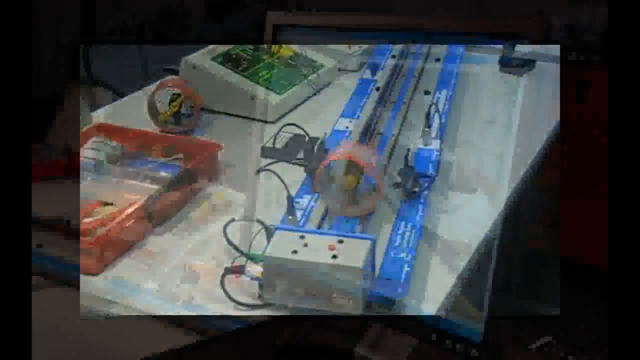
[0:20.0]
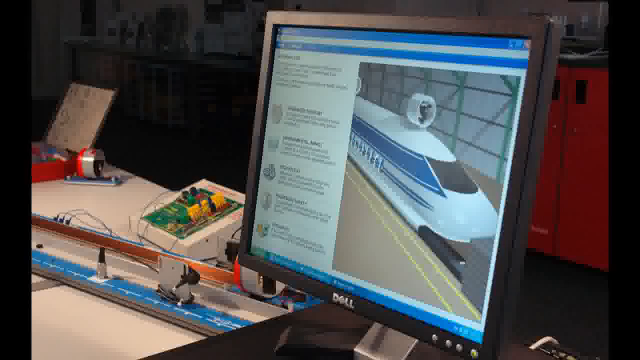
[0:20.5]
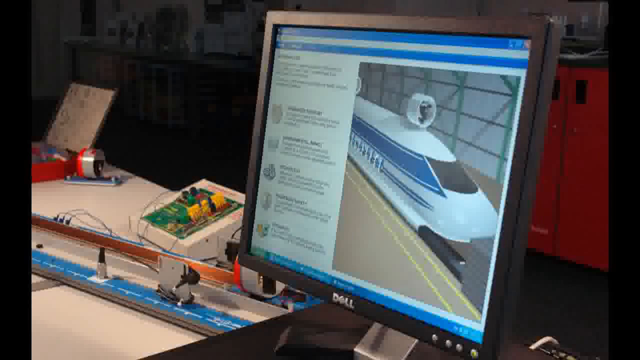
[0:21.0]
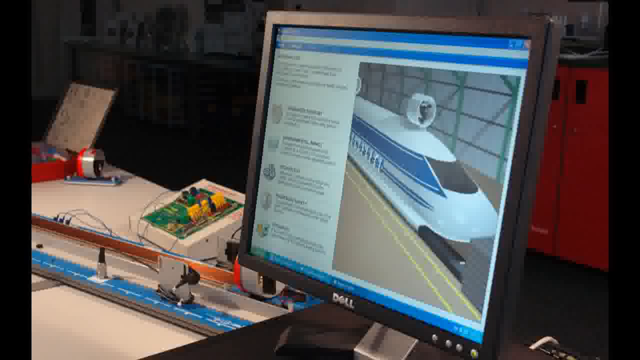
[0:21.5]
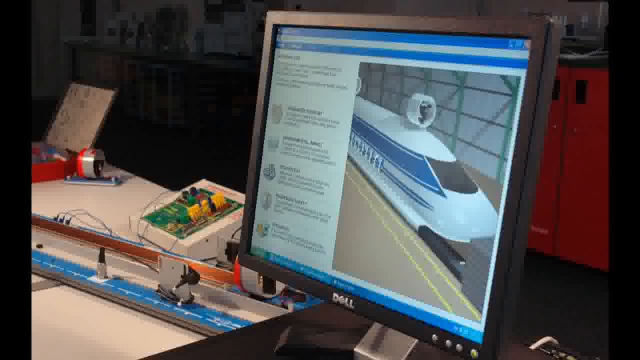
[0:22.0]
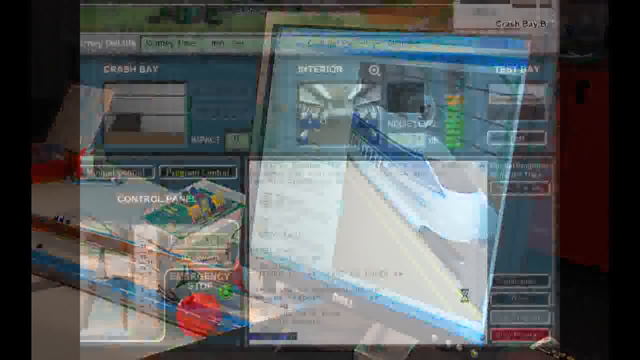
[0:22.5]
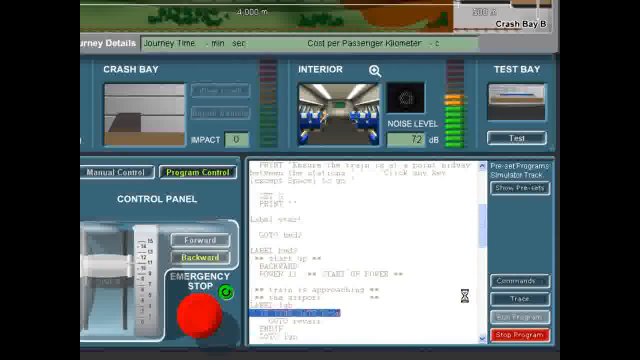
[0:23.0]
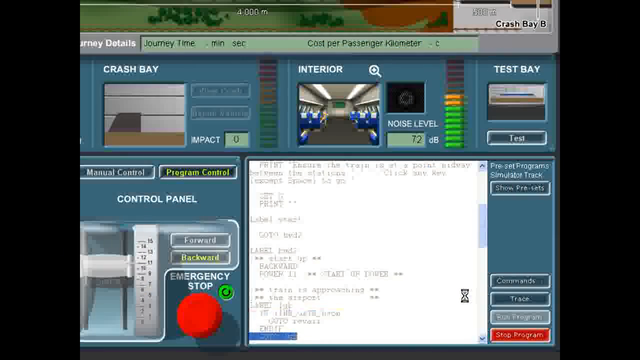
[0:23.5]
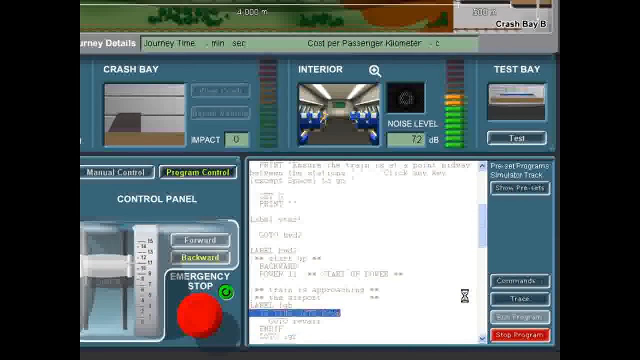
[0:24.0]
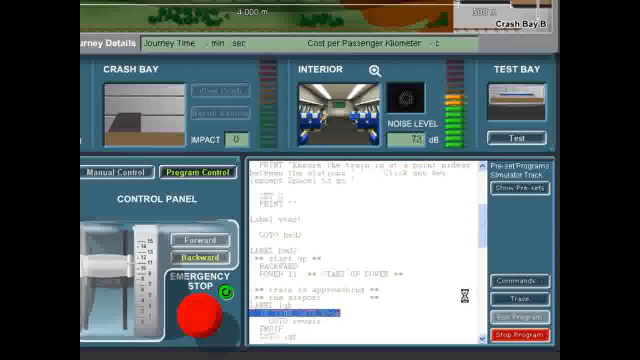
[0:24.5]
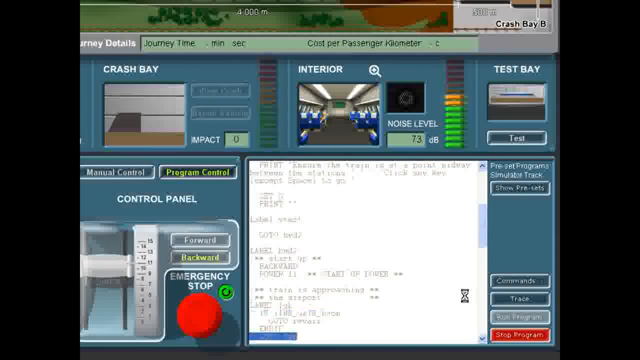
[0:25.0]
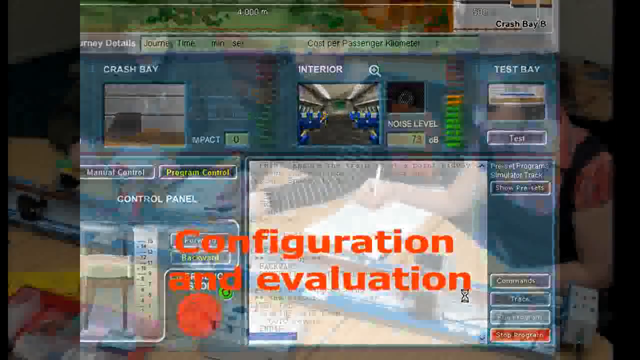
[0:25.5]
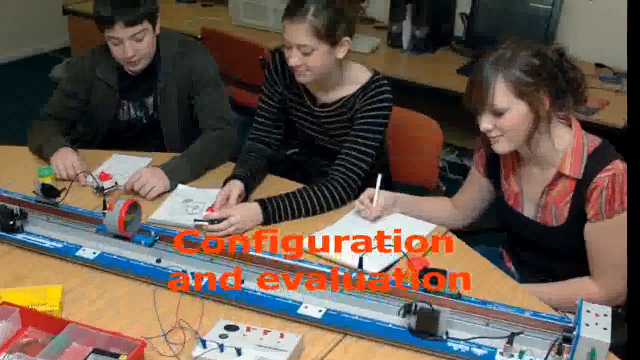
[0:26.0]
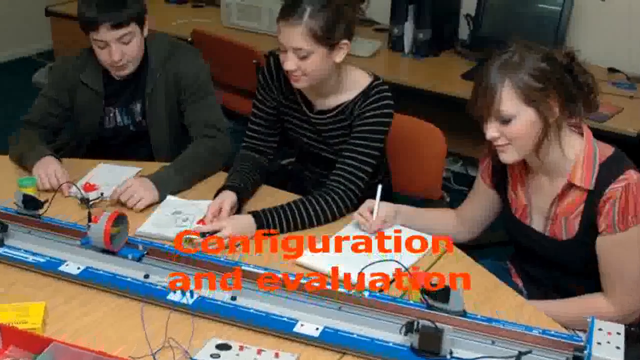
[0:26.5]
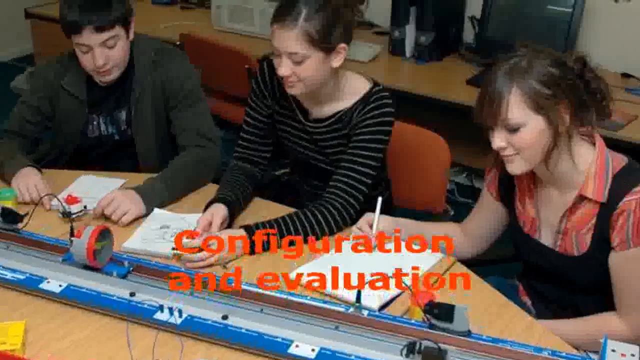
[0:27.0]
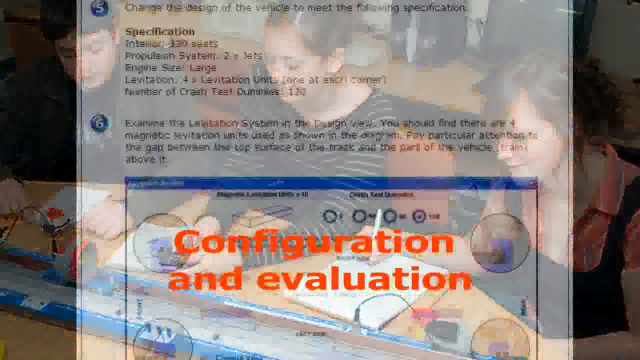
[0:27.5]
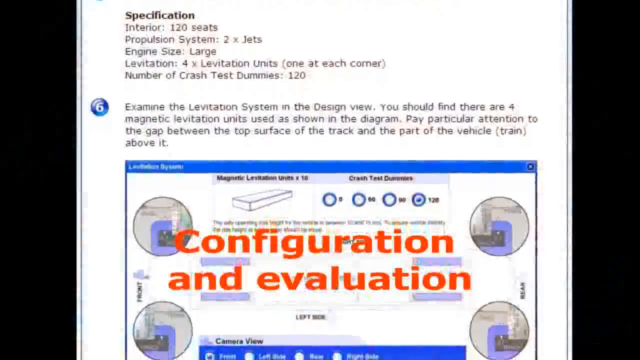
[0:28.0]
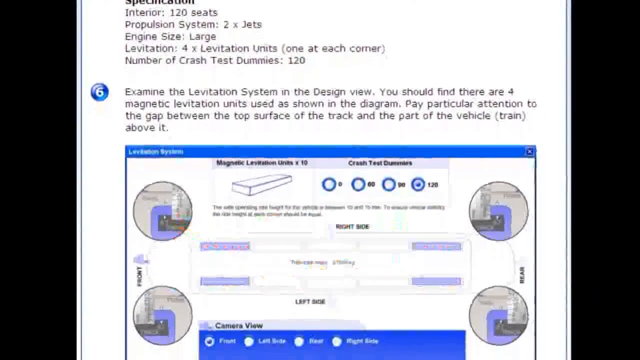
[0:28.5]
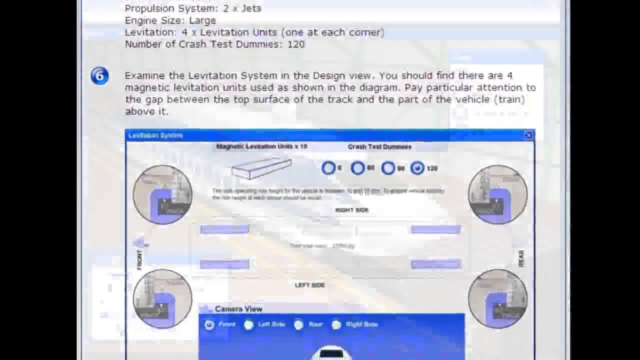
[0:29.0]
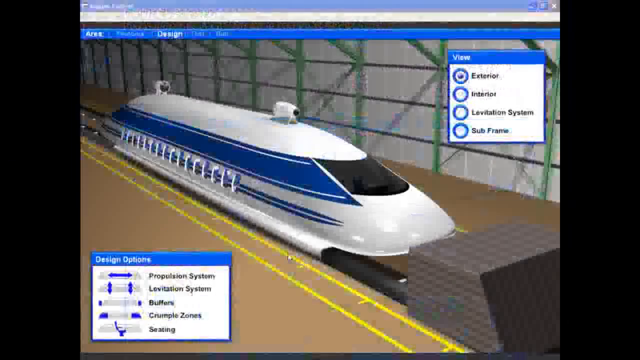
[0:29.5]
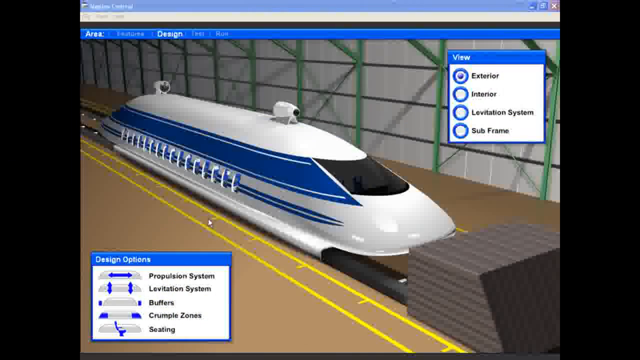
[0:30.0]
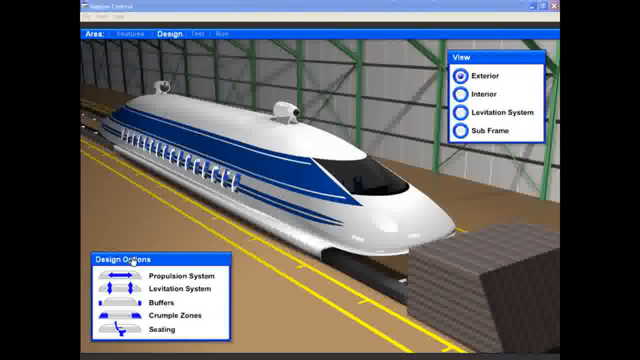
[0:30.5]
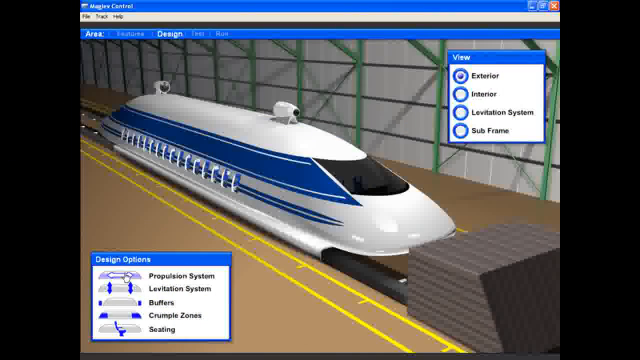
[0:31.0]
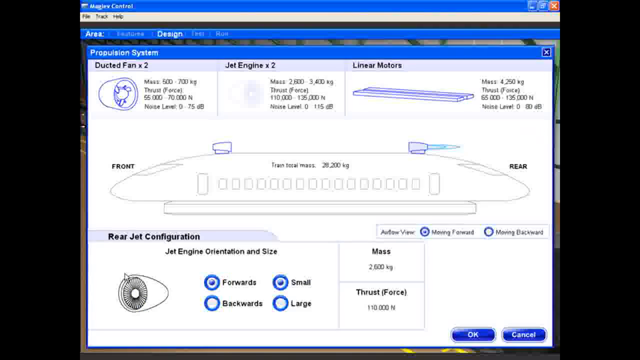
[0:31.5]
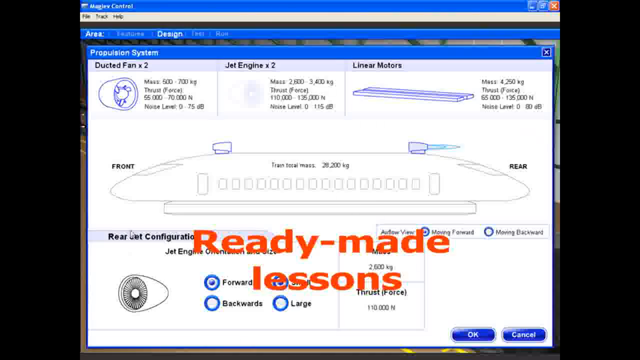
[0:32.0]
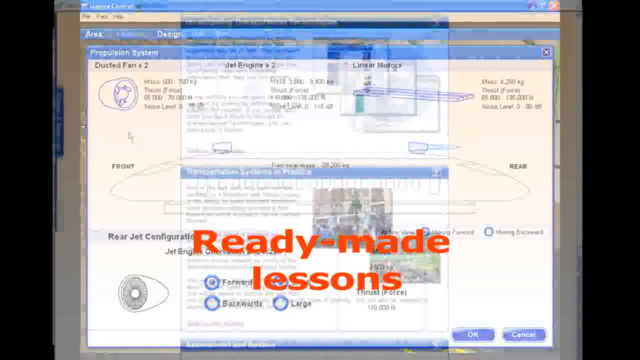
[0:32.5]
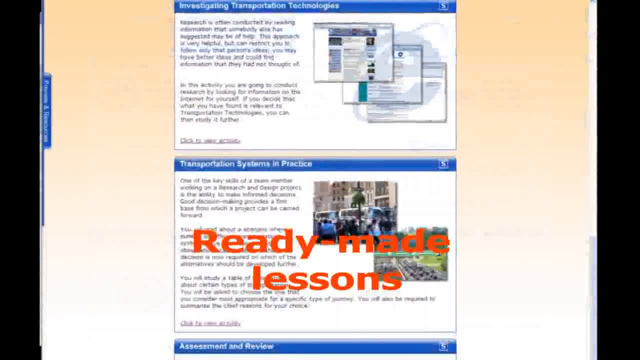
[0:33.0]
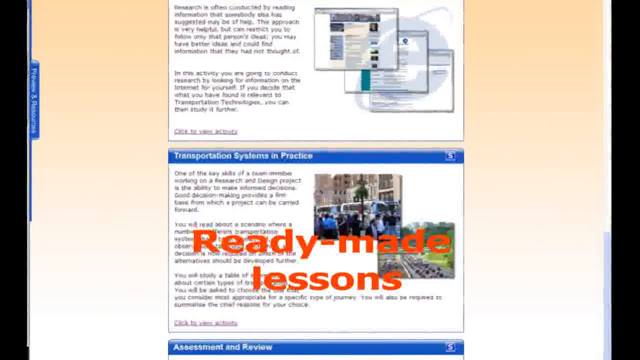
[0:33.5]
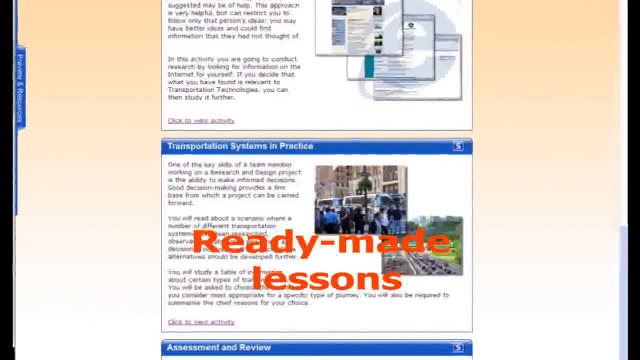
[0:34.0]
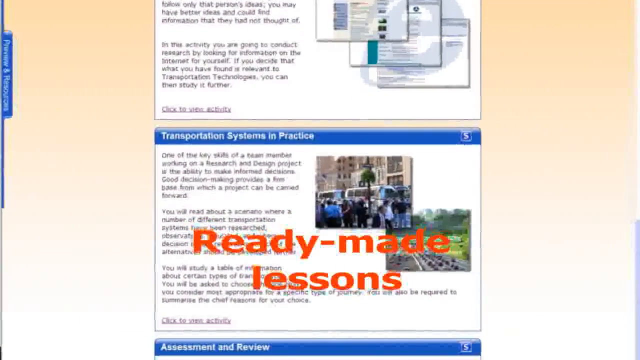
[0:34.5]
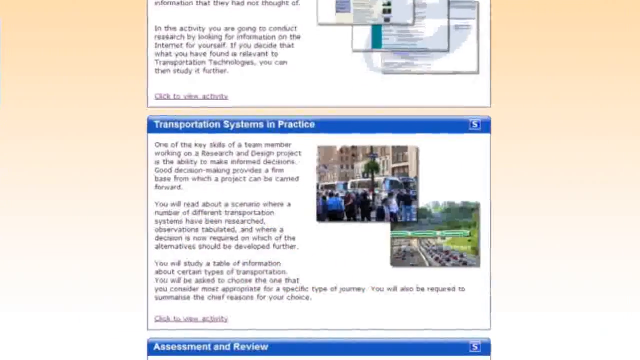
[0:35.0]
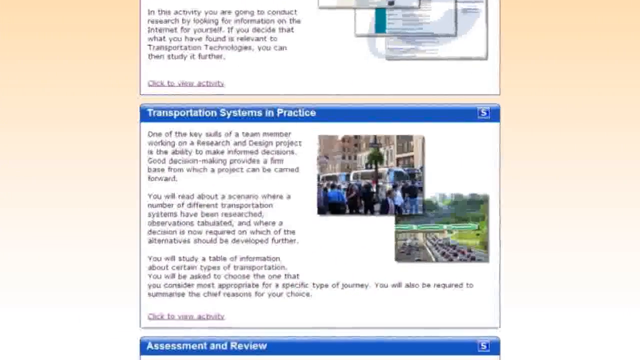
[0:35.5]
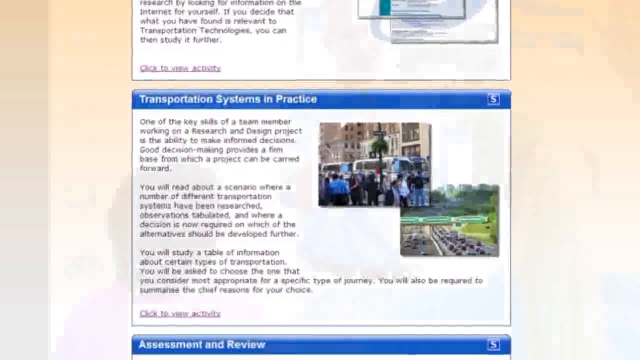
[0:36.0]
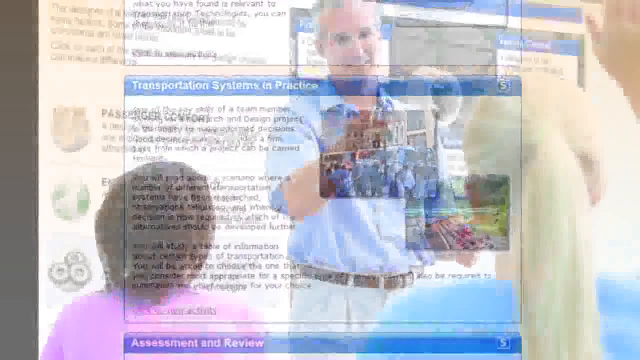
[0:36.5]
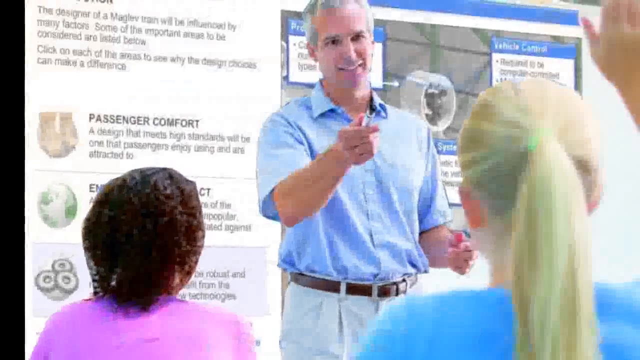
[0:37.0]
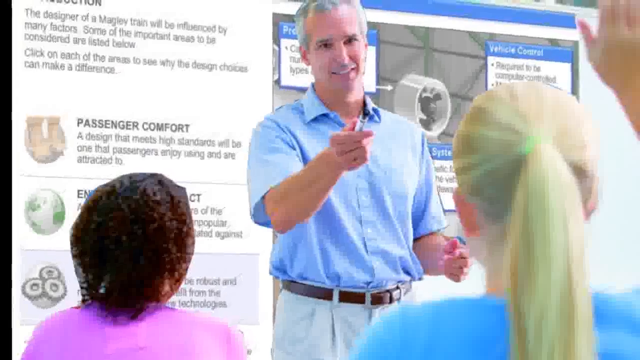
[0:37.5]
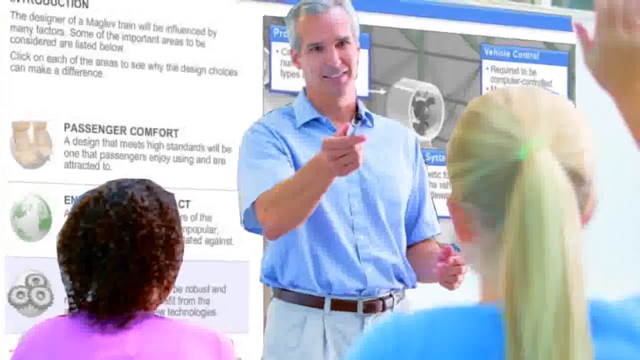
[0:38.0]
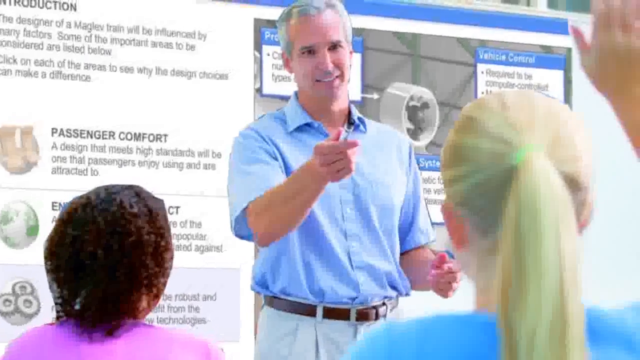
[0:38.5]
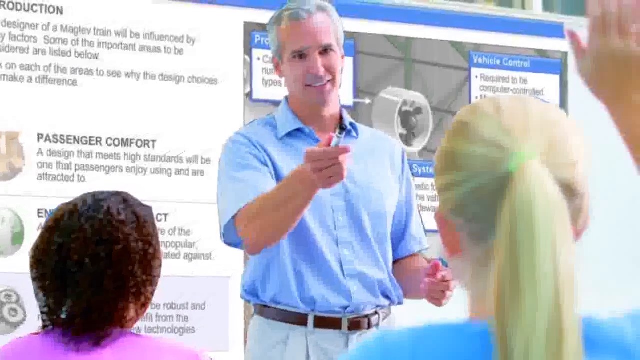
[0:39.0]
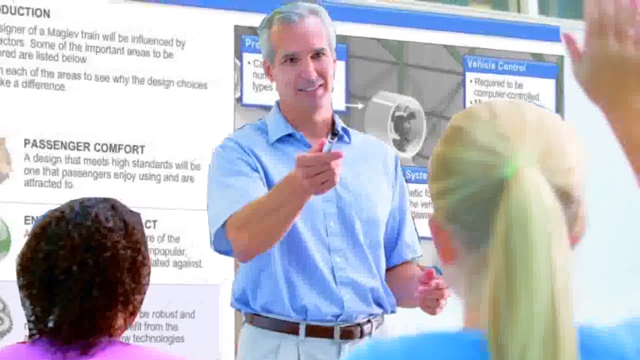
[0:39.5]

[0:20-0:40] An image of a desk with some sort of machinery coming towards the camera is replaced by an image of a desktop computer. A computer program page flashes on the screen for a few seconds before a still image of three students looking at the same paraphernalia appears, with orange bold writing at the bottom centre stating "configuration and evaluation". The view scrolls down a page about the trains, clicks on design options, and opens another webpage that says "ready made lessons" across it in orange, zooming into a section that says "transportation systems in practice". It then cuts to another still image of a middle-aged man in a blue shirt teaching some students, with a blonde girl with her hand up in the centre of the image. There are lots of zooms and cuts back and forth between the images. The style feels very 90s/early 2000s, almost like a PowerPoint with all of its different transitions, and it looks unprofessional and cheesy.